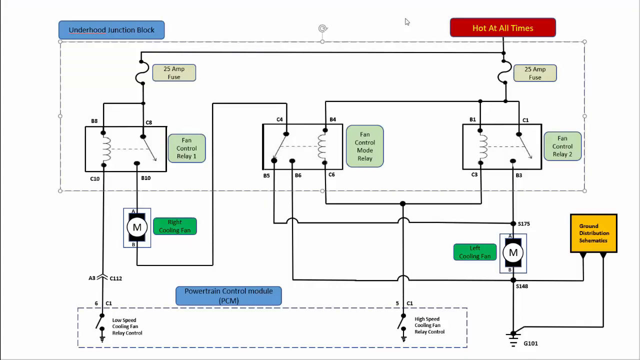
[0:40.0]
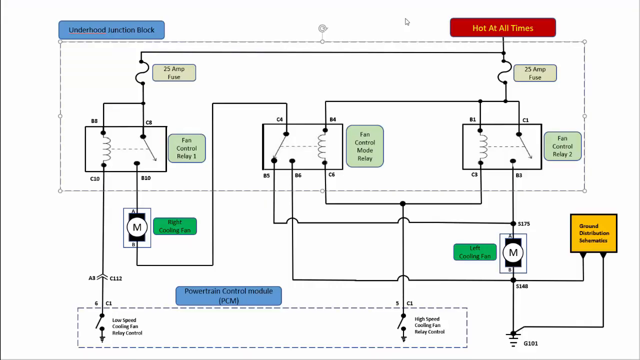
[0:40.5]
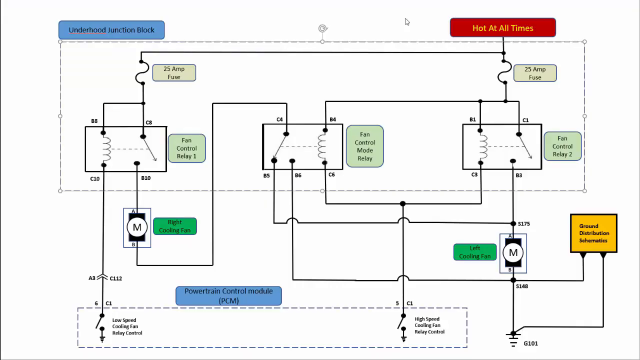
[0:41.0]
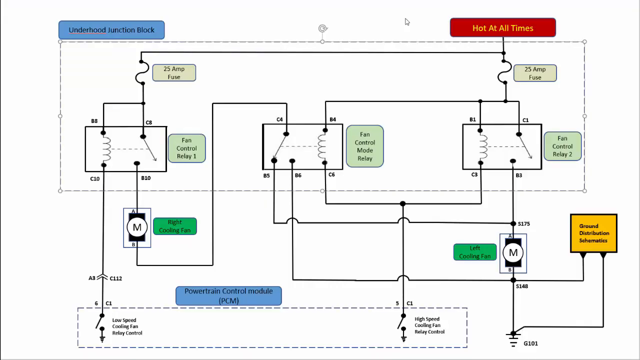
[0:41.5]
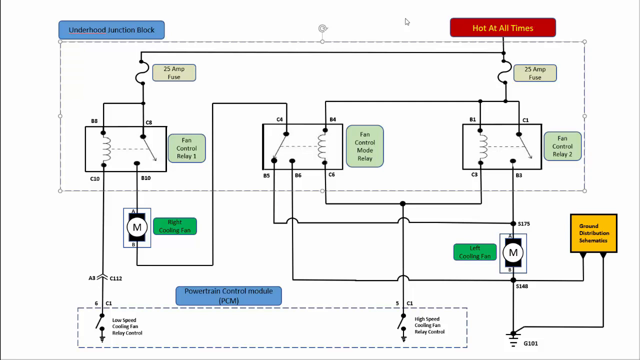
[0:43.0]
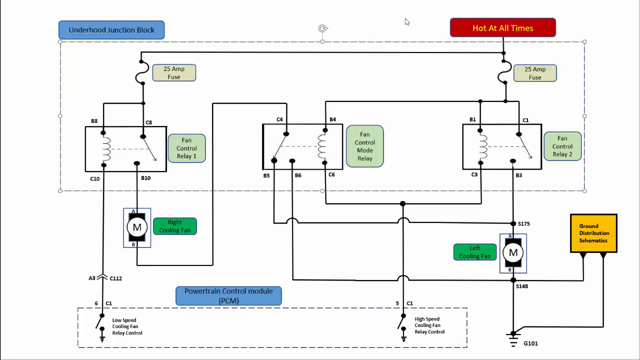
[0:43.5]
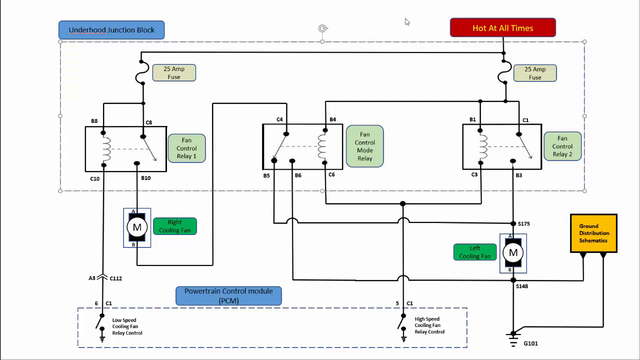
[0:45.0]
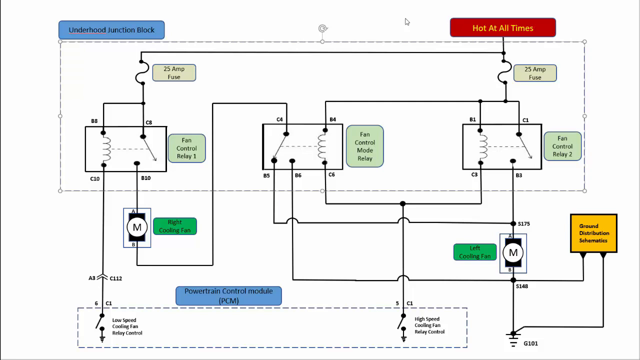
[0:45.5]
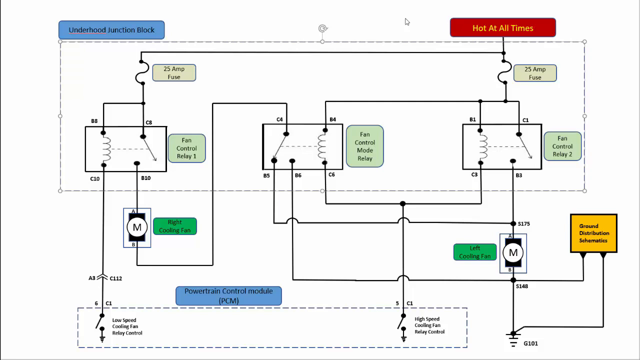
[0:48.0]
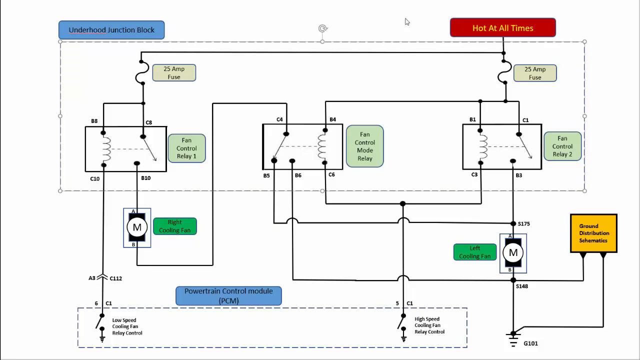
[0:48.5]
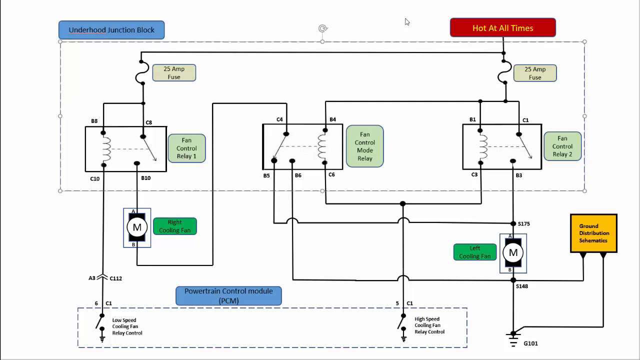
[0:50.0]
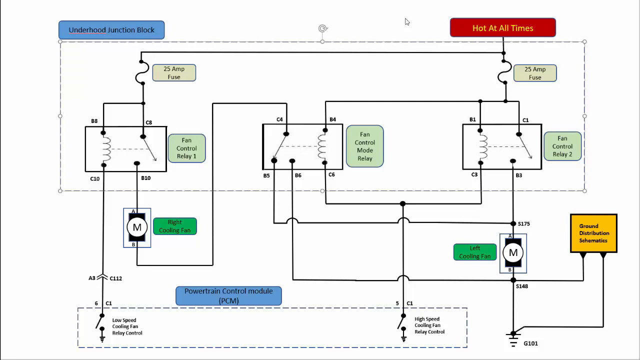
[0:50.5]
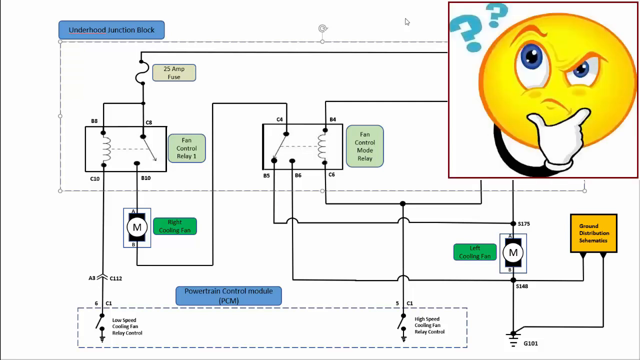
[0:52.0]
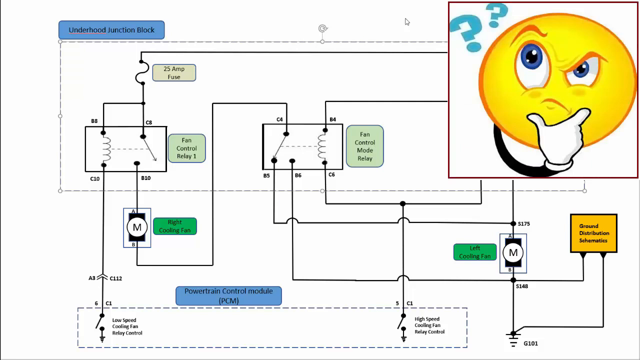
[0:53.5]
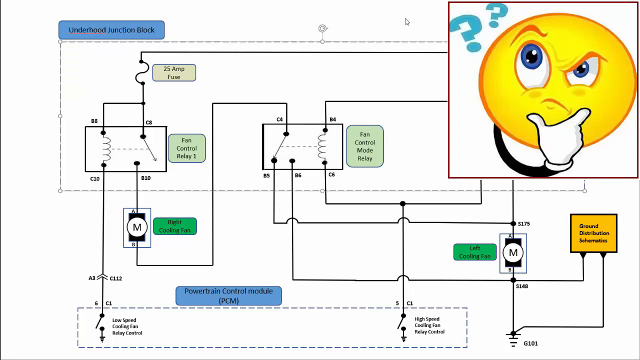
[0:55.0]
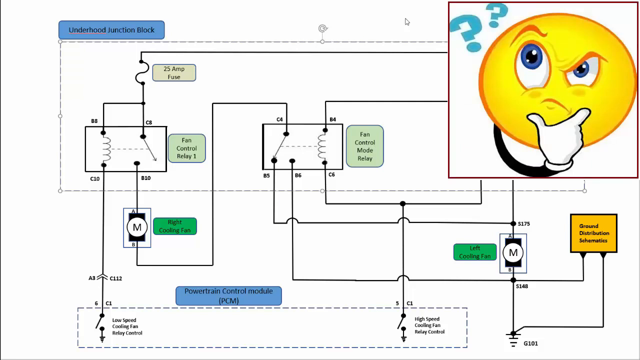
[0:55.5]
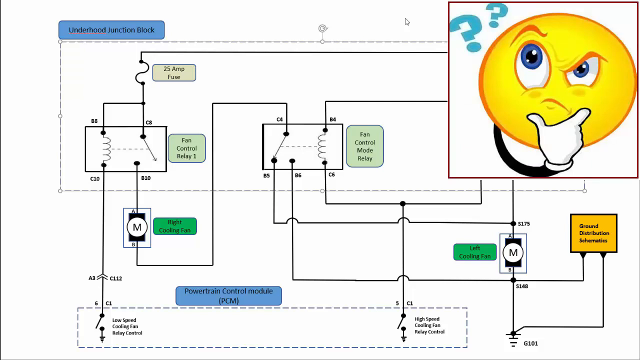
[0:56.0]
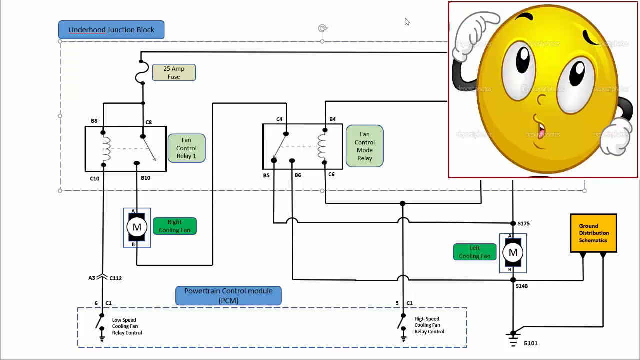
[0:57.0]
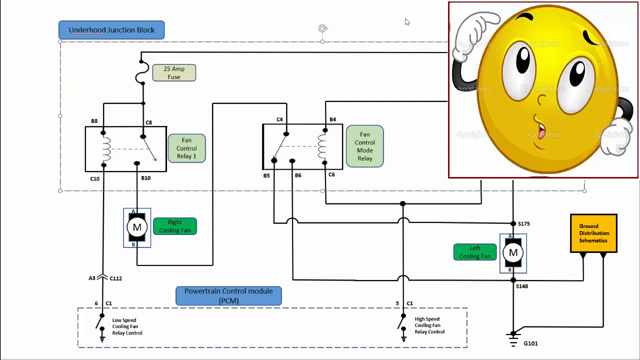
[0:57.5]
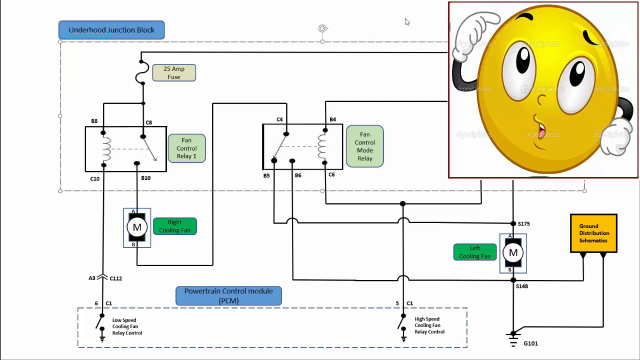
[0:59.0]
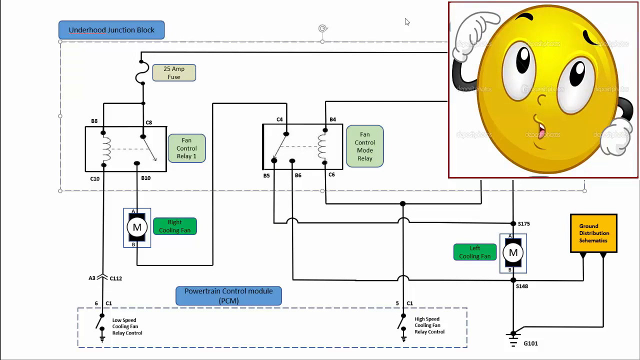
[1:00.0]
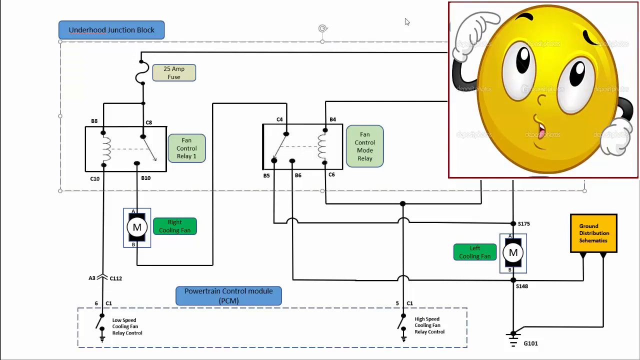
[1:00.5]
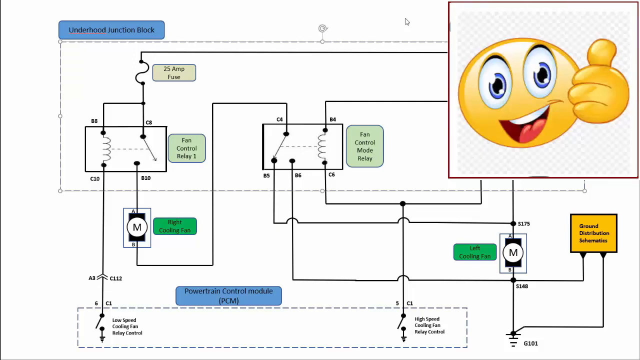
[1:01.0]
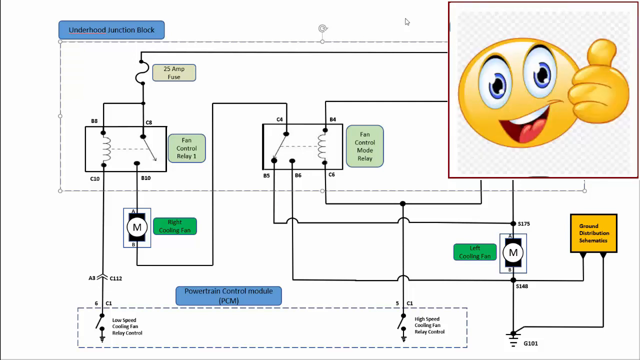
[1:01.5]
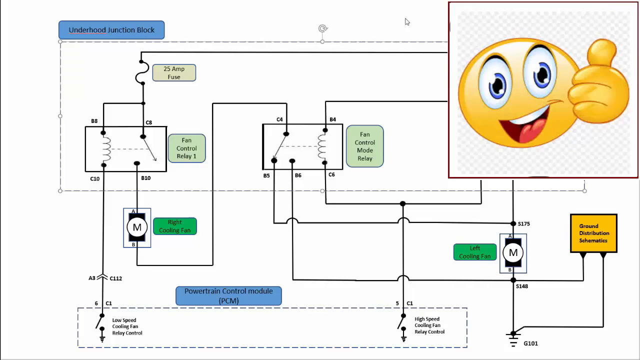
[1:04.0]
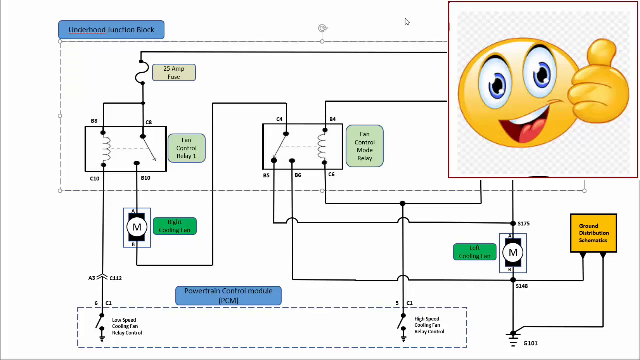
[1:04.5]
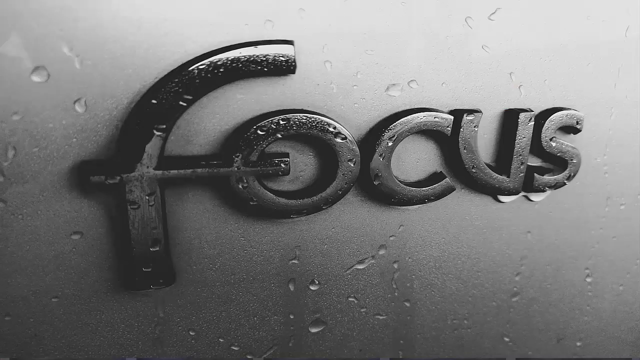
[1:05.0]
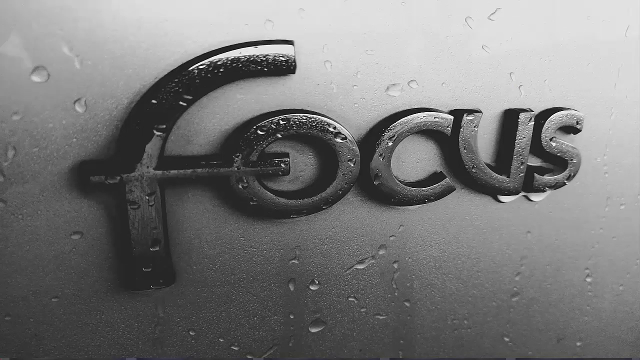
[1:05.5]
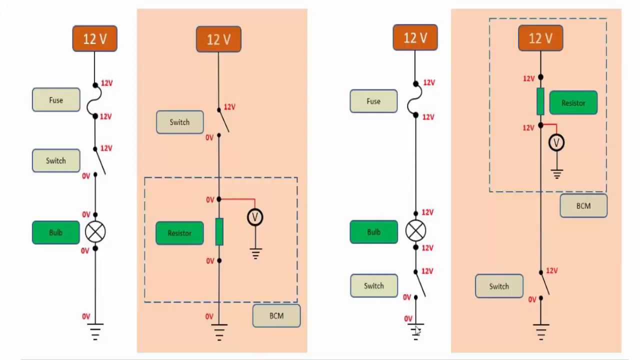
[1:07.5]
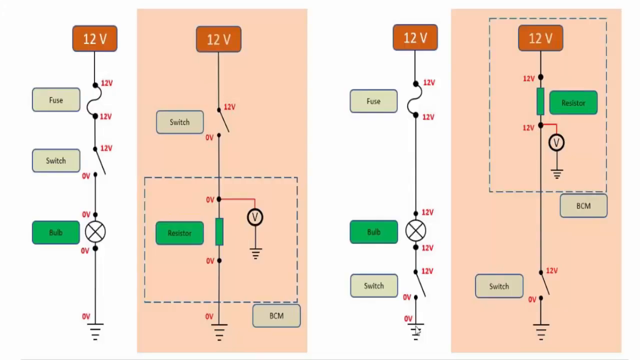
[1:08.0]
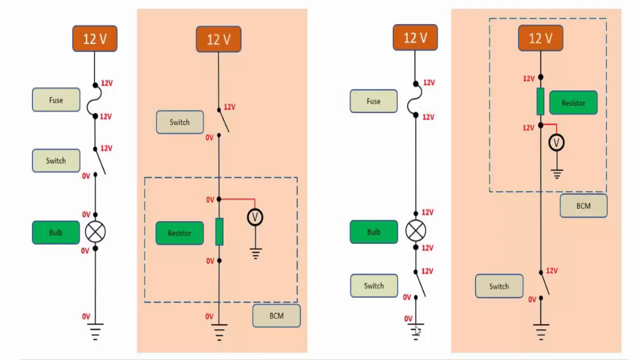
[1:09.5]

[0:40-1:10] The diagram illustration shows "hot at all times" in bright red and a 25 amp fuse illustrated in light green. There is the PCM, the powertrain control module, along with a bunch of other illustrations. Three fan control relays are shown, and two 25 amp fuses appear on the diagram. Nothing else happens while the diagram is shown. Then an emoji of somebody thinking appears: a yellow round circle with blue eyes, white in the eyes, a black arm and a white-gloved hand. Next comes an emoji with a surprised look: a yellow round ball with black at the top for the eyebrows, two arms with black hands and white gloves, and a mouth with a little pink in it and a little white for teeth. Then a yellow thumbs-up emoji appears: a yellow round circle with a smile, white eyes, blue irises and black pupils, with the tongue and a little bit of teeth visible.